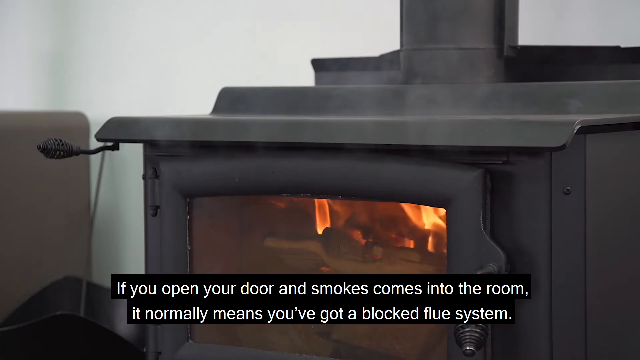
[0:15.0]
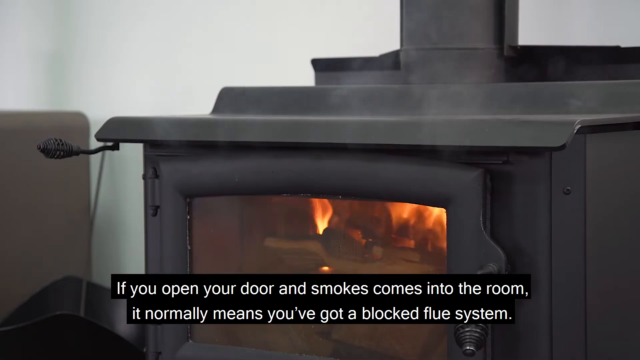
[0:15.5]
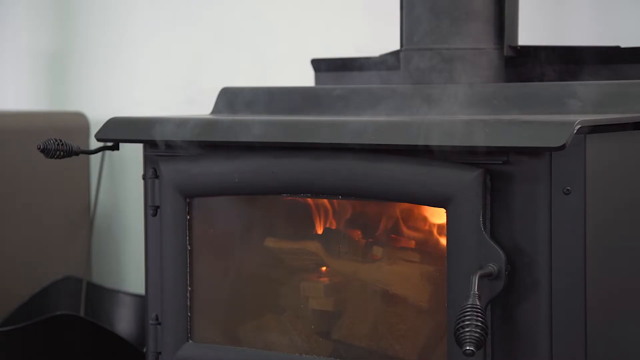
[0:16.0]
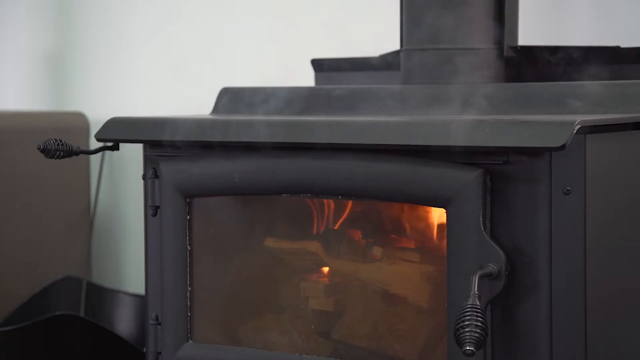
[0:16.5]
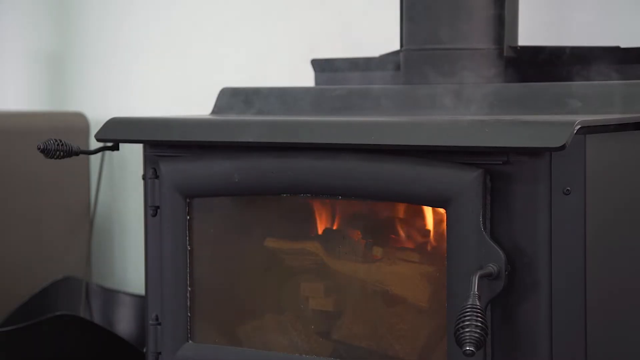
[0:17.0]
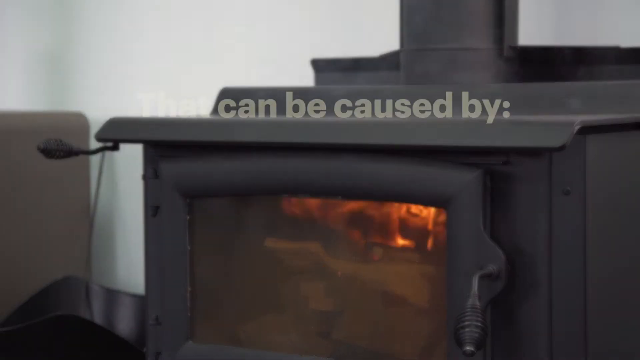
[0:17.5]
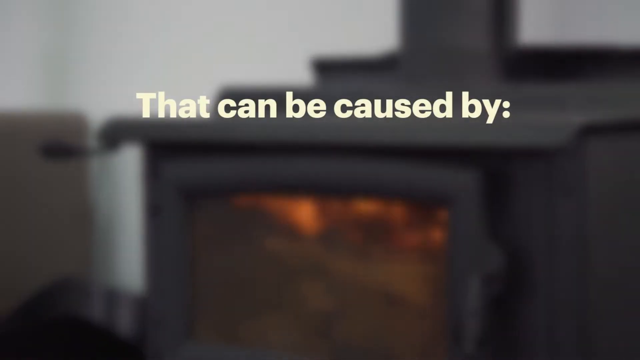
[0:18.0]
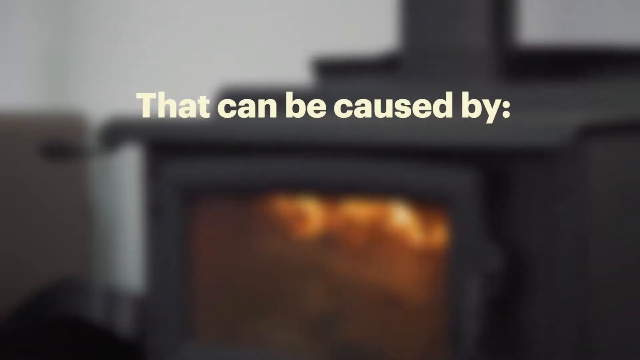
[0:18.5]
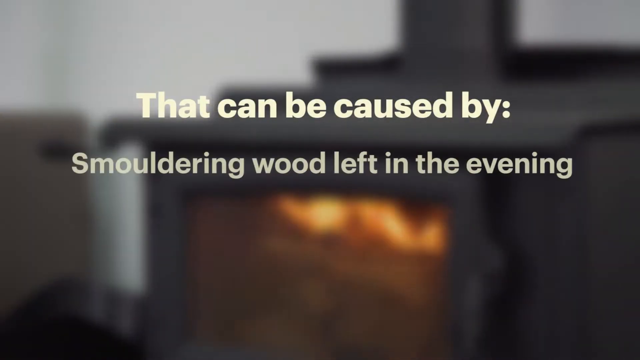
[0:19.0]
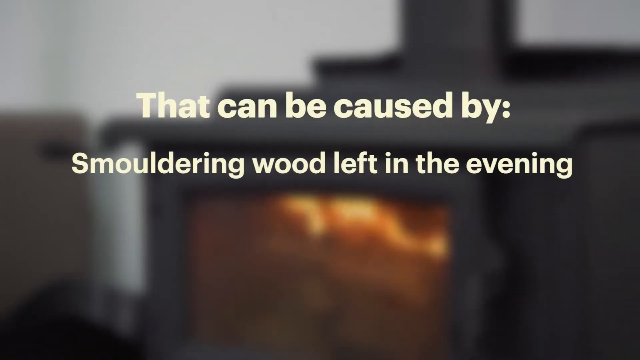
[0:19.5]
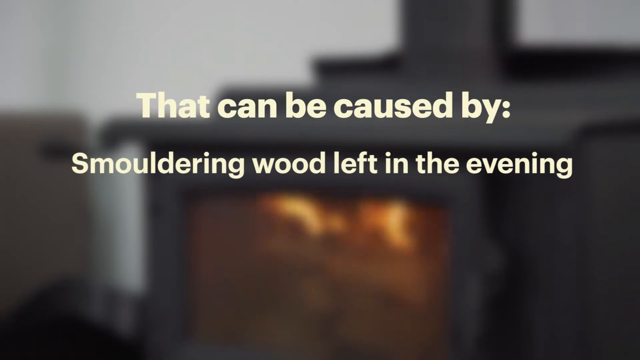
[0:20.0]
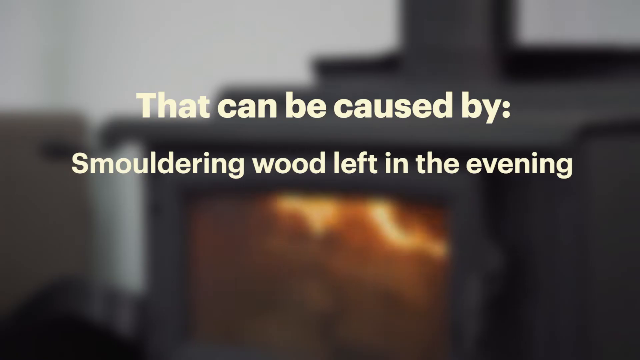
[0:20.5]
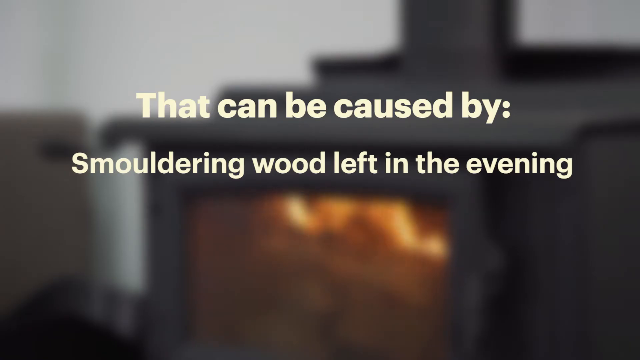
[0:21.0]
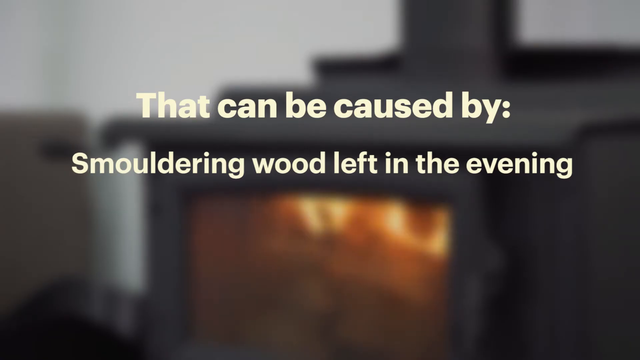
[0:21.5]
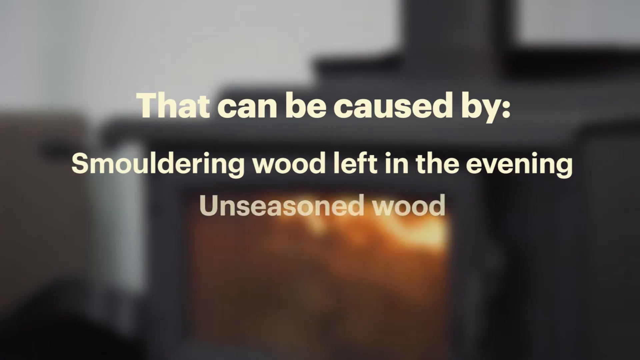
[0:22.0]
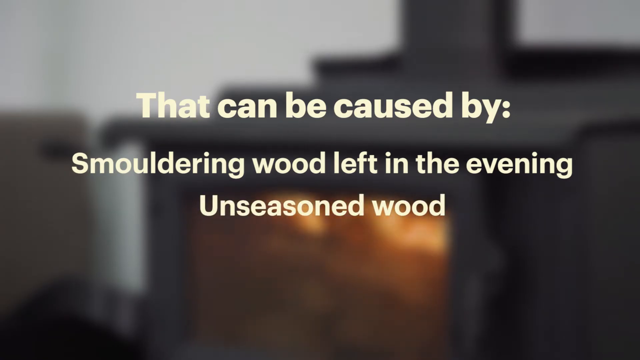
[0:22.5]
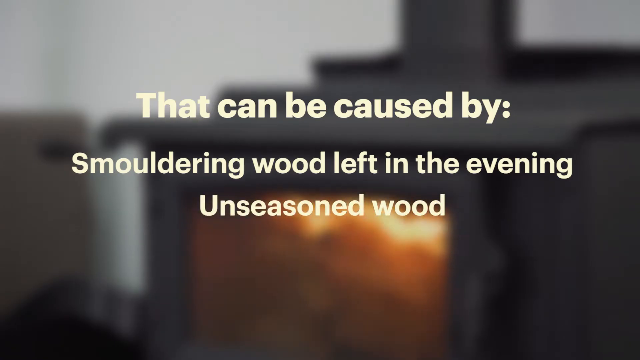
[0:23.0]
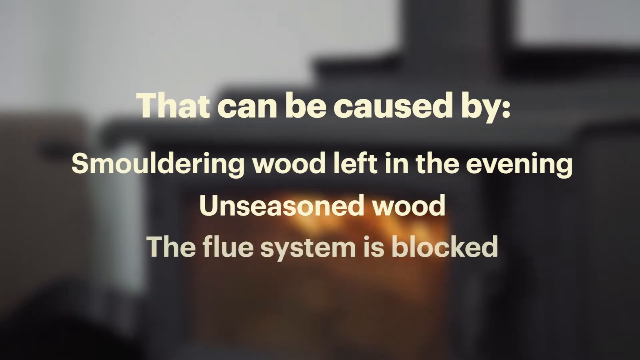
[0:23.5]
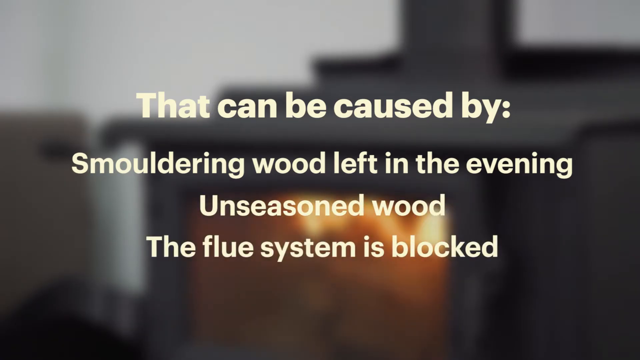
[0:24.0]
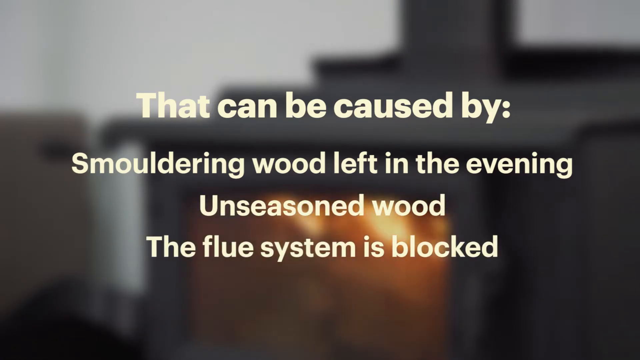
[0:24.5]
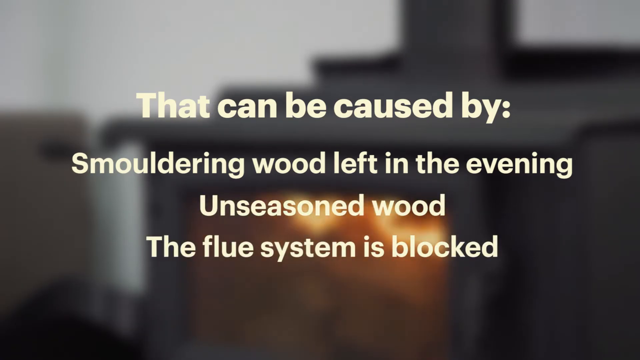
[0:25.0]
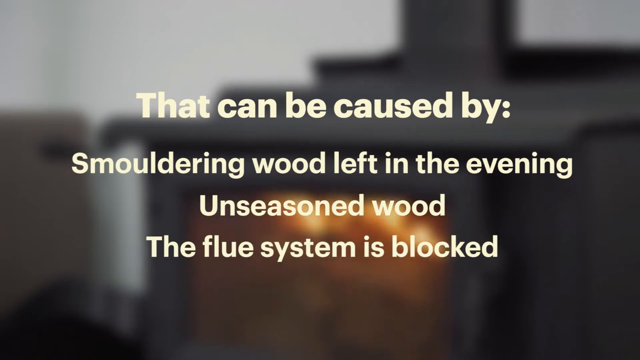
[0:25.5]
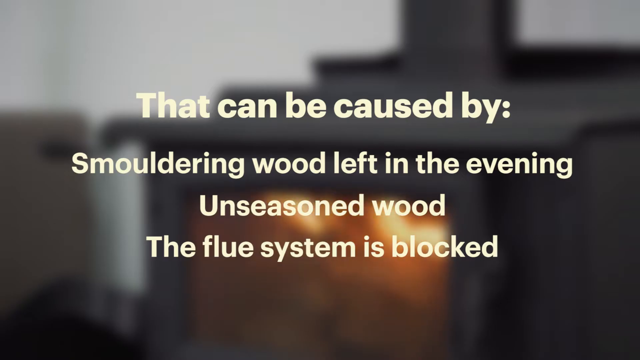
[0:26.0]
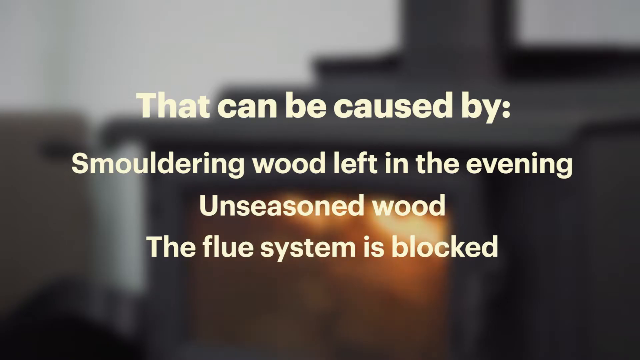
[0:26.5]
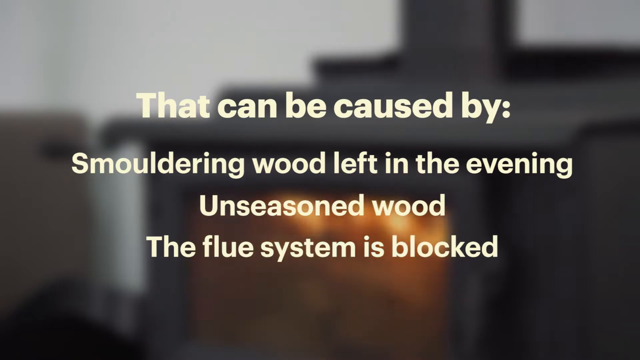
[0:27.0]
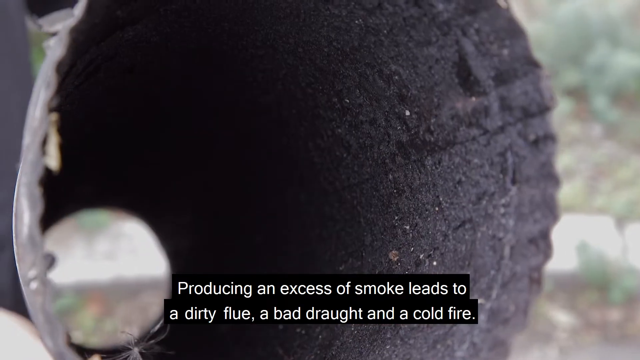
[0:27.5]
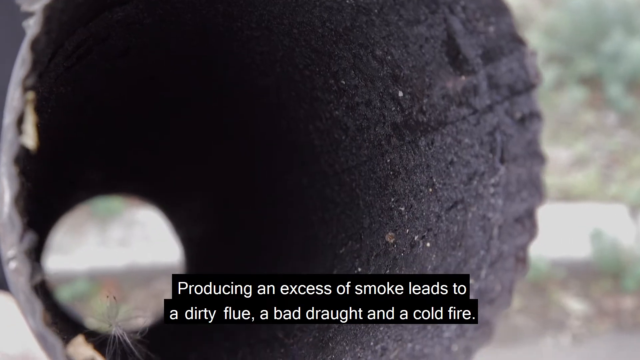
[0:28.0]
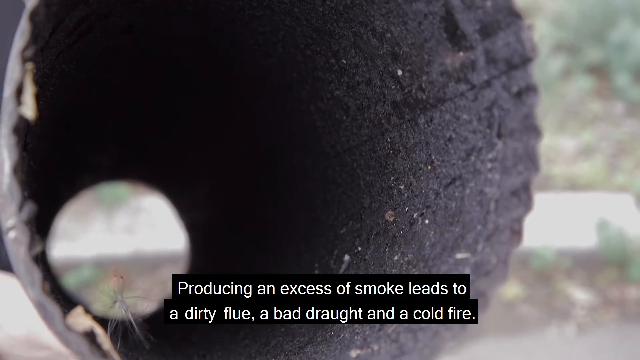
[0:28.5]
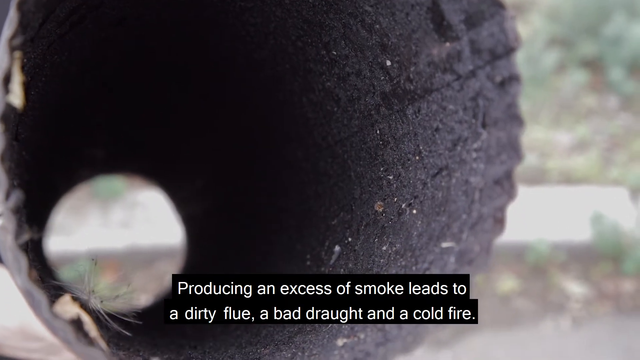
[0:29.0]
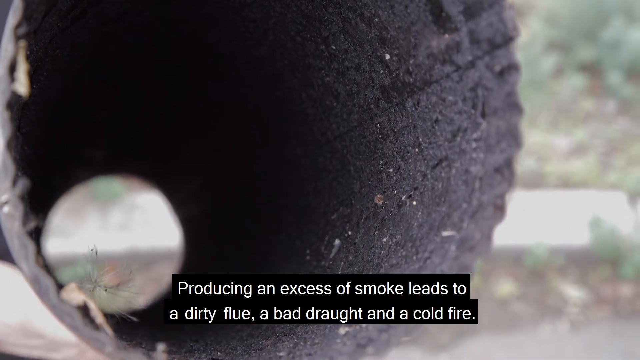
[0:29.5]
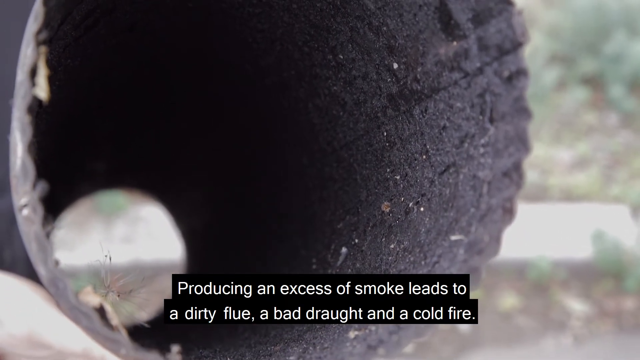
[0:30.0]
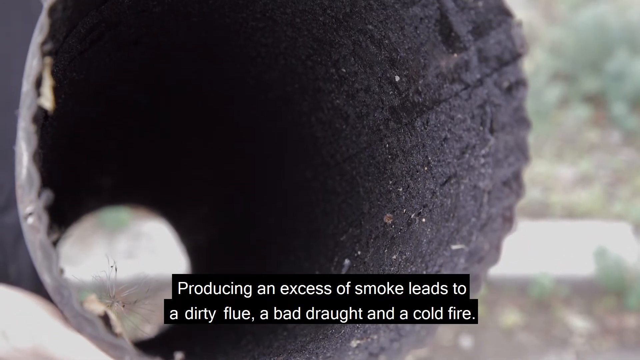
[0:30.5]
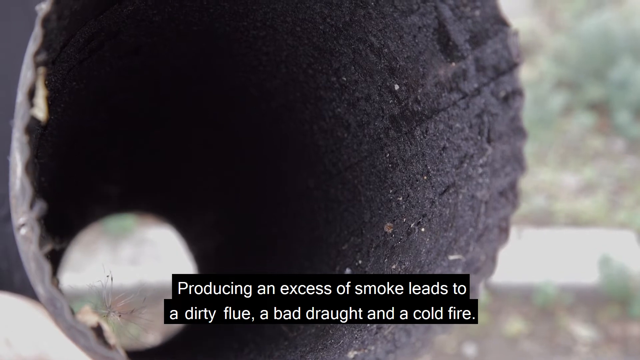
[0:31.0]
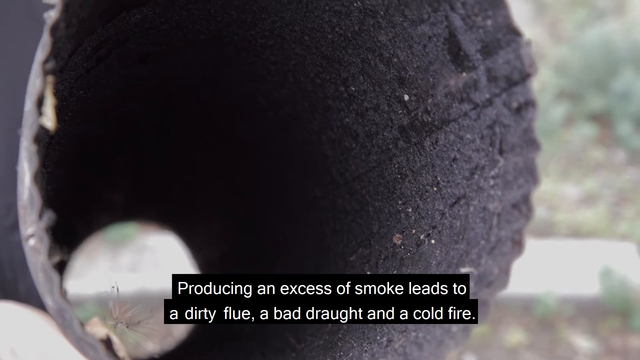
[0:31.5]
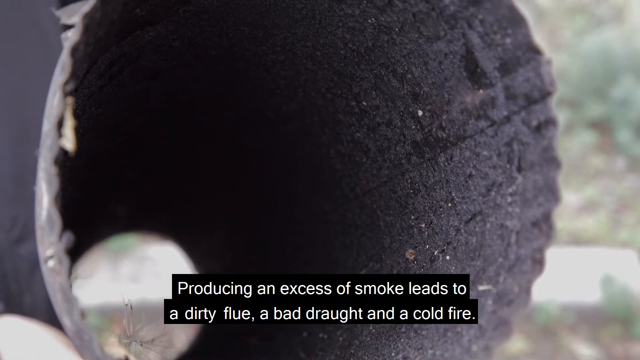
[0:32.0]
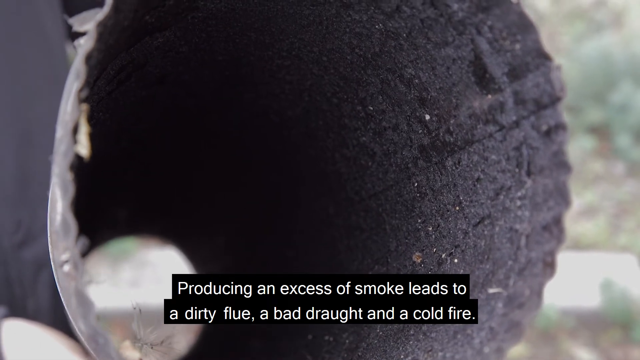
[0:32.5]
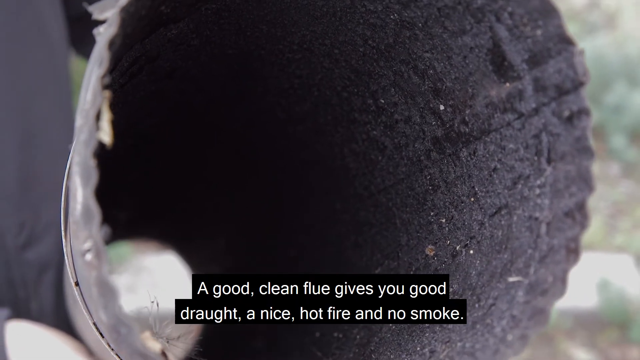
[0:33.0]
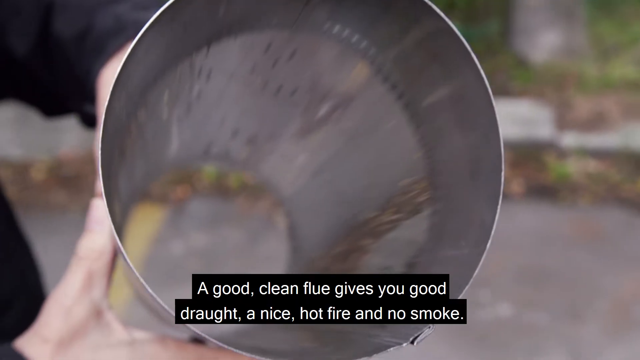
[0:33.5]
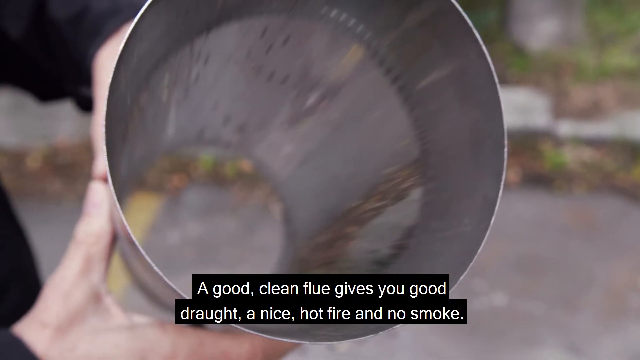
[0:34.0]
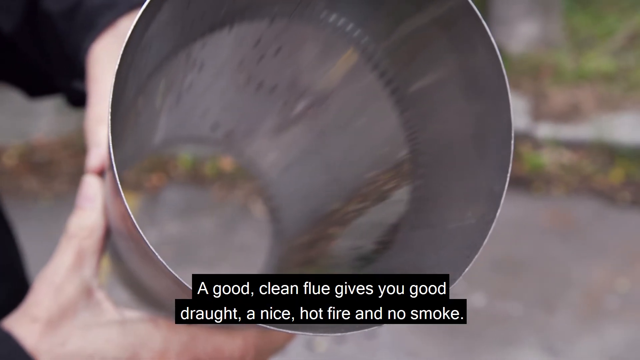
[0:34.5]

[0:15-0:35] The closed fireplace is shown on its own in a single view; the man is no longer on screen. The fireplace is running, with the fire going inside, visible though not entirely clear through the window. The image becomes blurry and cream-colored text appears: "that can be caused by smoldering wood left in the evening, unseasoned wood, the flue system is blocked." Subtitles embedded in the video read: "producing an excess of smoke leads to a dirty flue, a bad drought, and a cold fire." A very thin log that can be seen through and looks very hollow is shown; its inside looks dirty, like coal. After that, another cylinder that looks clear and shiny is shown very quickly.